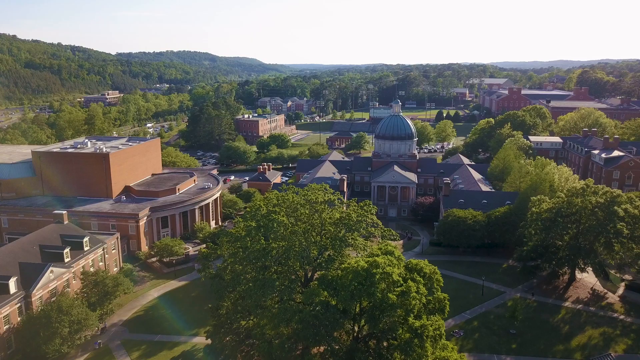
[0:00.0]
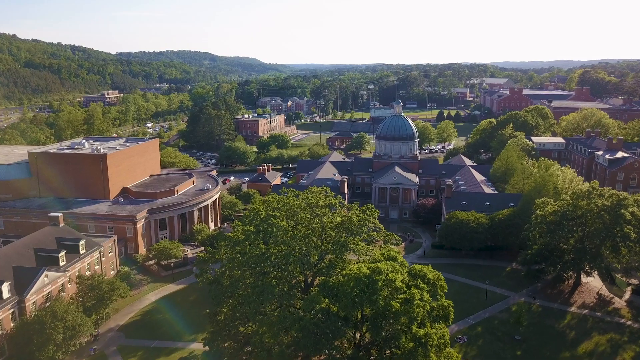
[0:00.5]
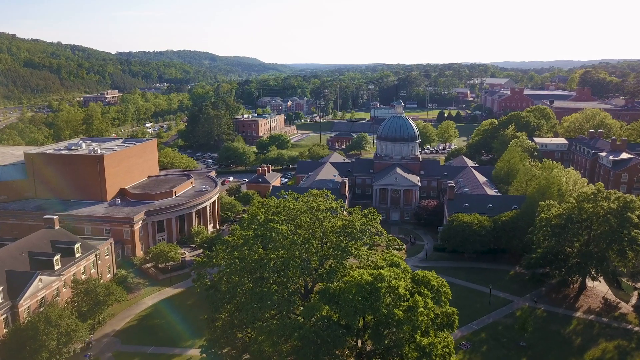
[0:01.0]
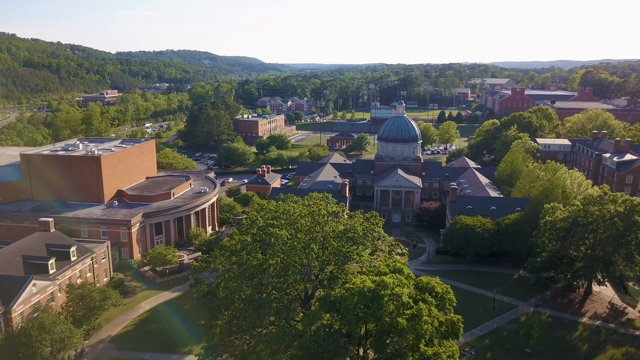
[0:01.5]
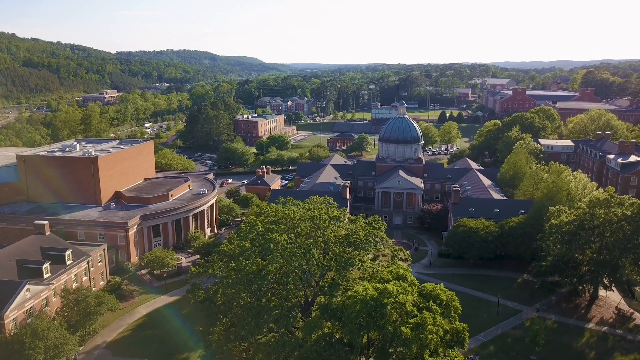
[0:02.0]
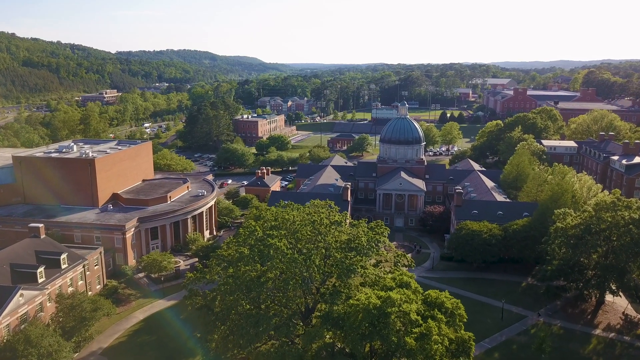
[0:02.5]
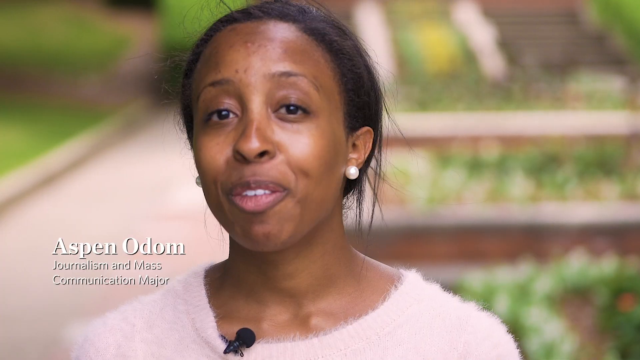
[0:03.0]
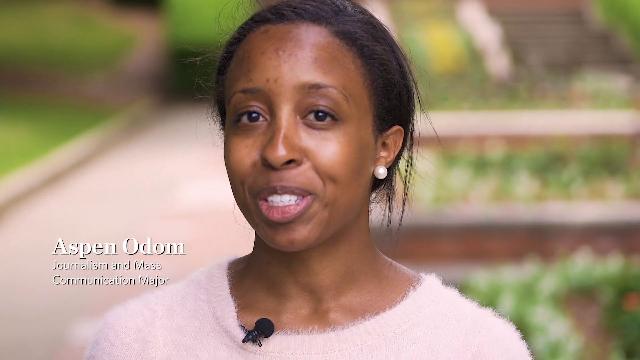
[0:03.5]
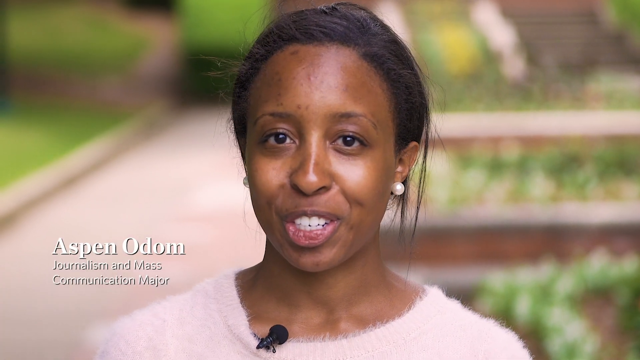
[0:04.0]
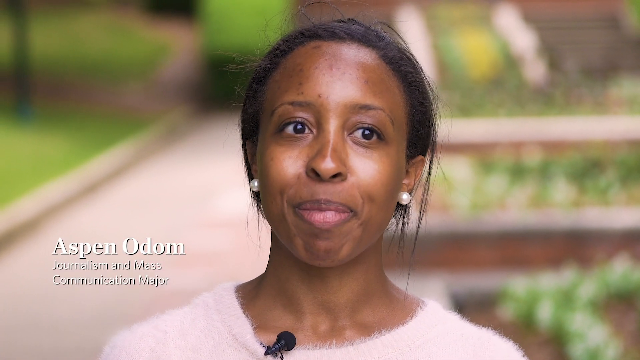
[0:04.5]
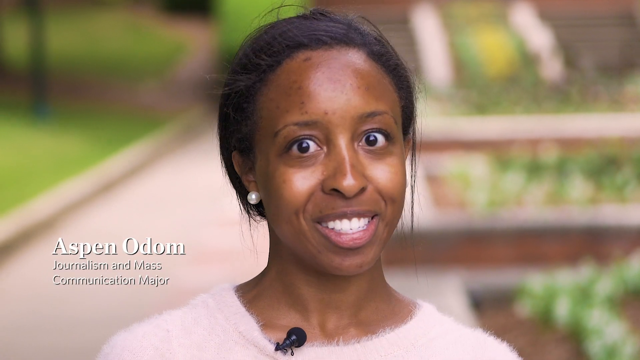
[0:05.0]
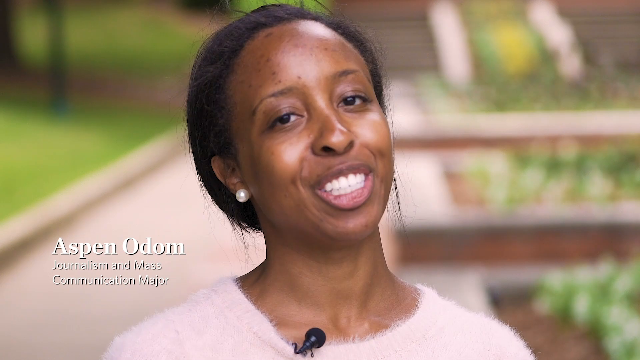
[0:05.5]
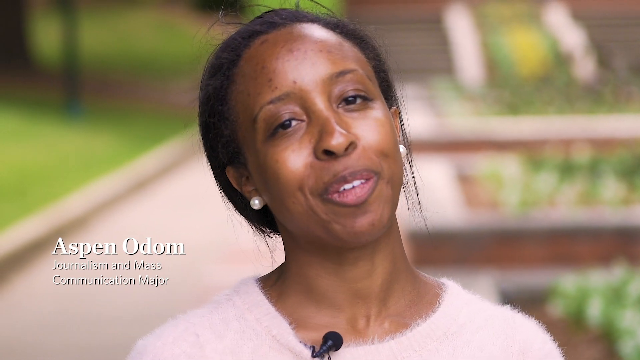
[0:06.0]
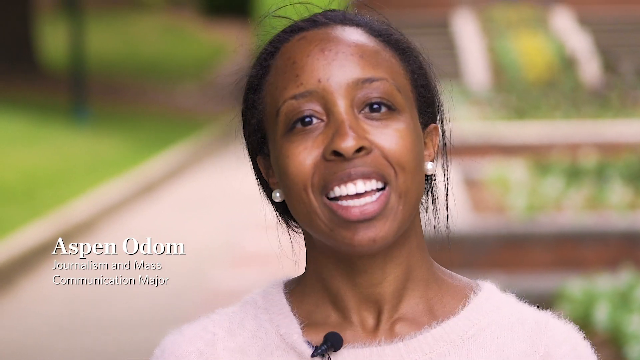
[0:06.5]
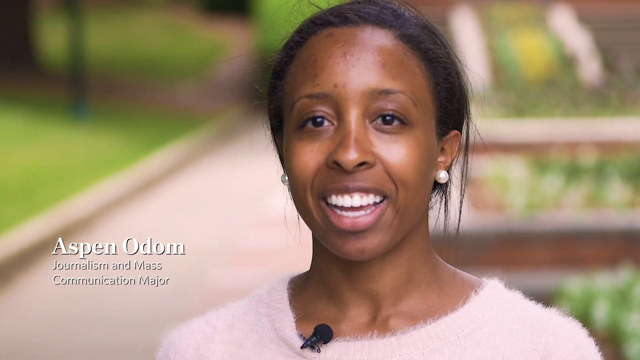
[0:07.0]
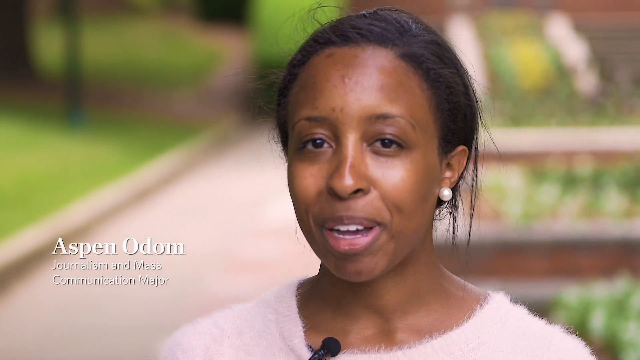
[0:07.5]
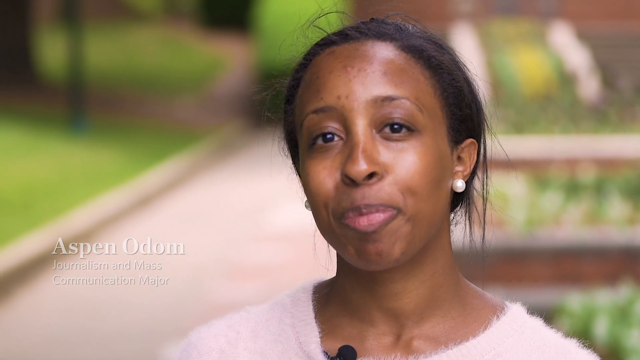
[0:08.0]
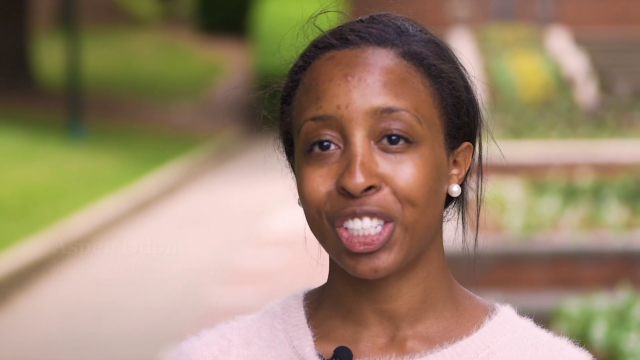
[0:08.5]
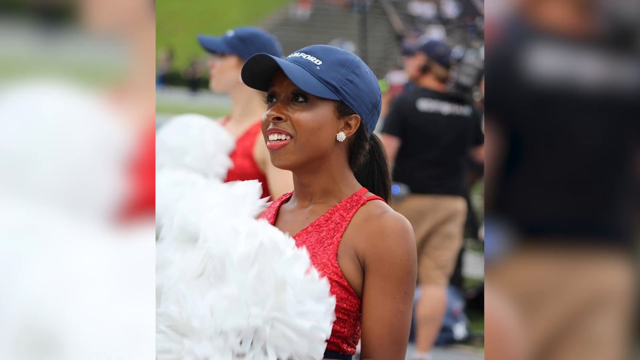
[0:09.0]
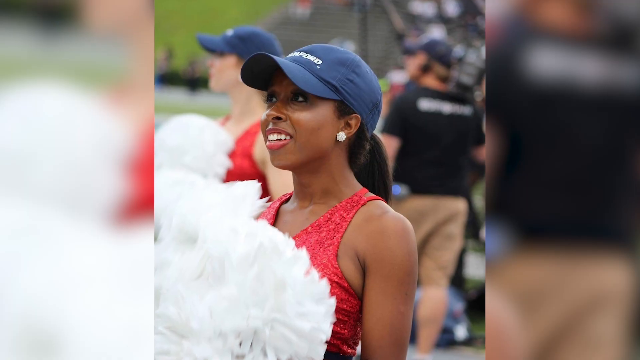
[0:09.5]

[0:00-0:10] An aerial shot shows what could be a college campus, with green grass and buildings that look like they are made of red brick. The camera pans forward, then the video cuts to a young woman with medium brown skin and dark hair pulled back into what looks like a little ponytail. She wears large pearl earrings and a pink sweater. On-screen text identifies her as Aspen Odom, a journalism and mass communication major. She talks to the camera for several seconds, and then the shot cuts to a picture of her doing what looks like a recreational activity, with her hair pulled back and wearing a baseball cap.